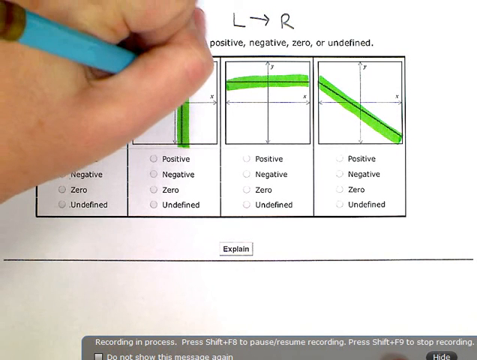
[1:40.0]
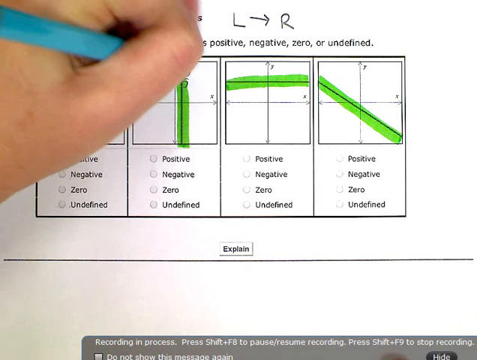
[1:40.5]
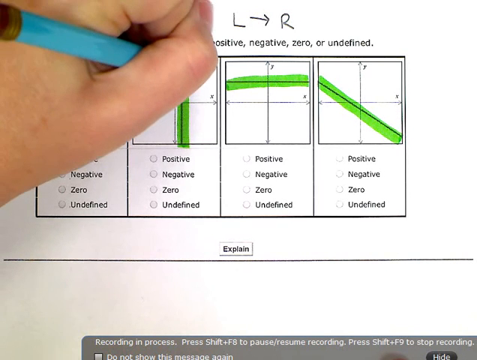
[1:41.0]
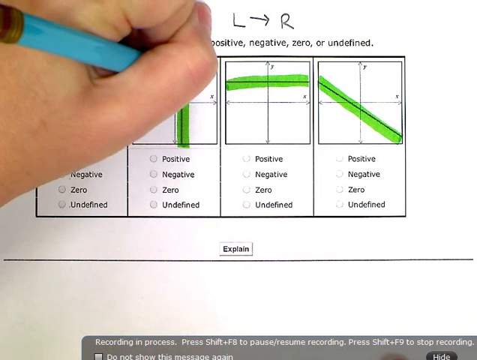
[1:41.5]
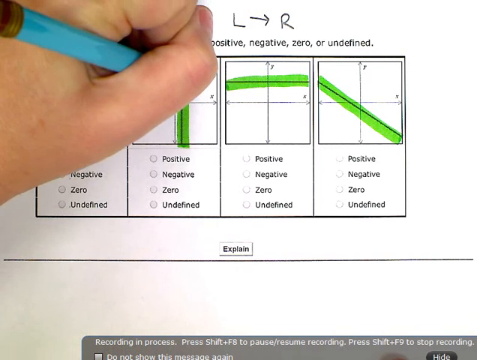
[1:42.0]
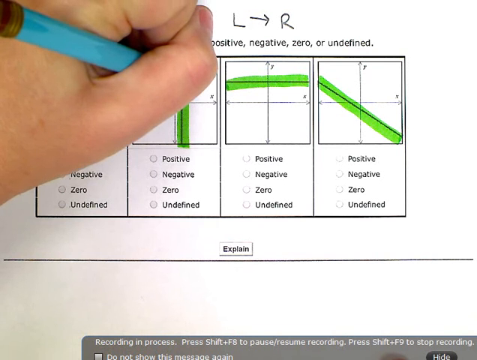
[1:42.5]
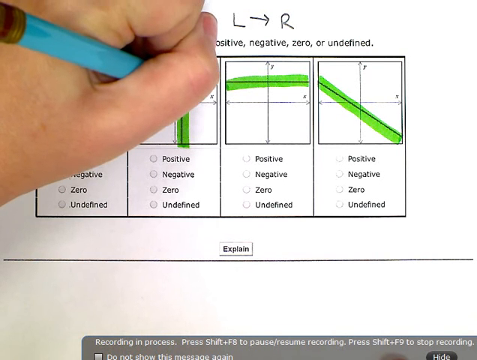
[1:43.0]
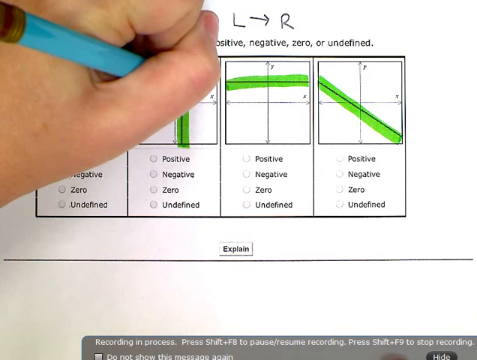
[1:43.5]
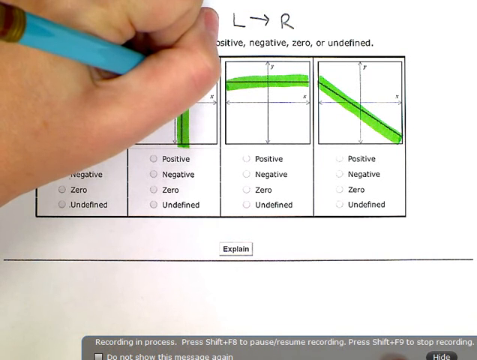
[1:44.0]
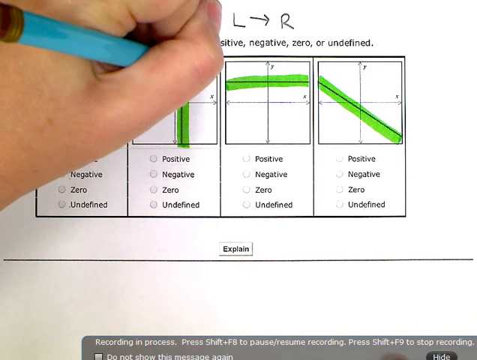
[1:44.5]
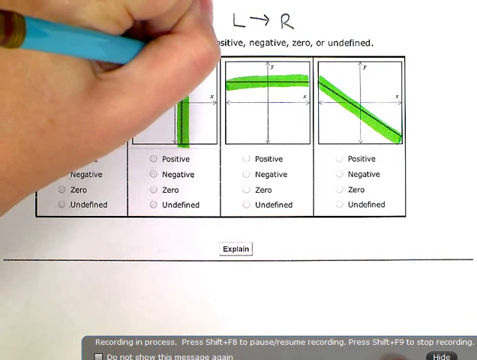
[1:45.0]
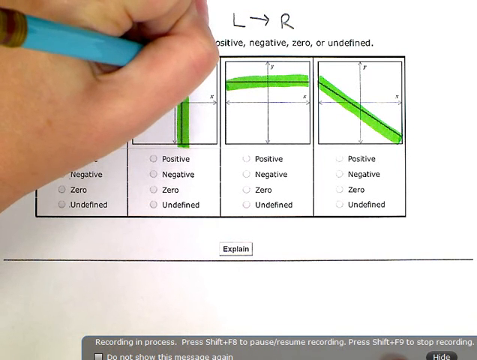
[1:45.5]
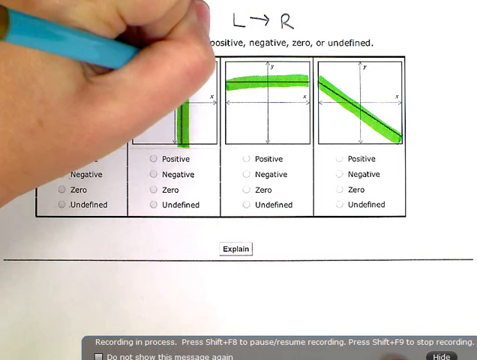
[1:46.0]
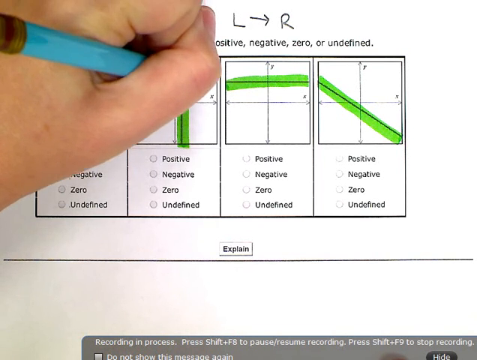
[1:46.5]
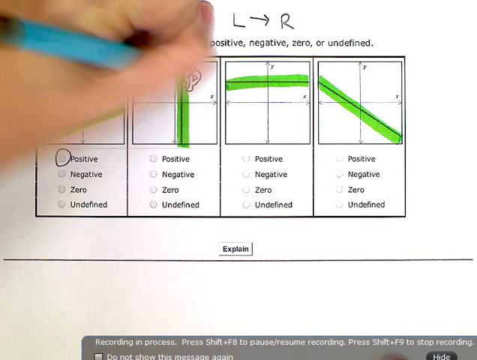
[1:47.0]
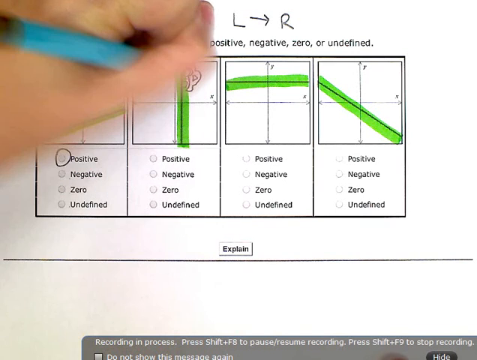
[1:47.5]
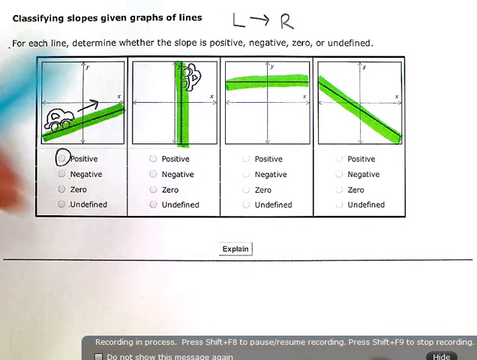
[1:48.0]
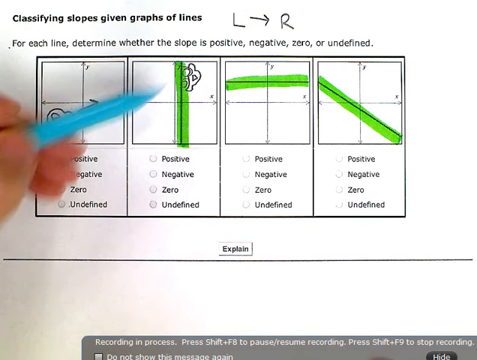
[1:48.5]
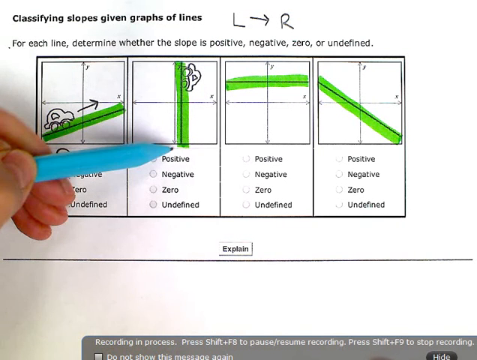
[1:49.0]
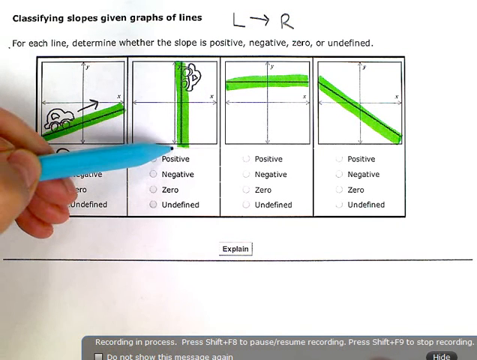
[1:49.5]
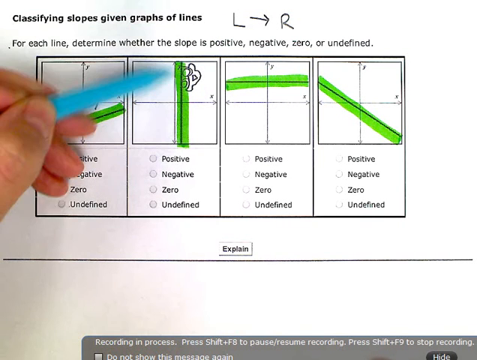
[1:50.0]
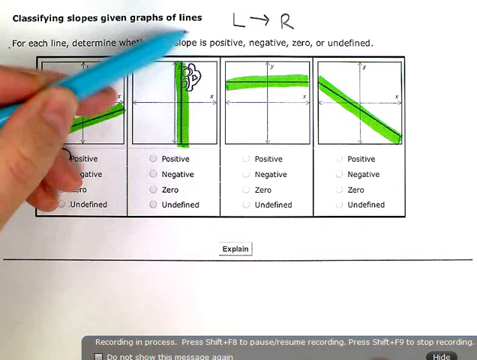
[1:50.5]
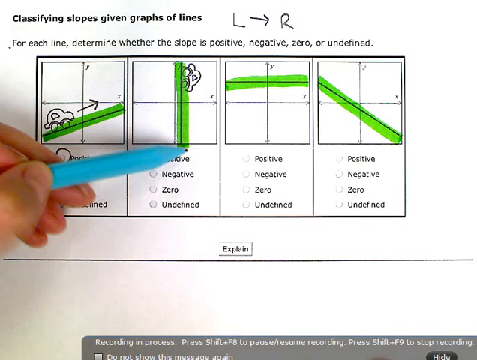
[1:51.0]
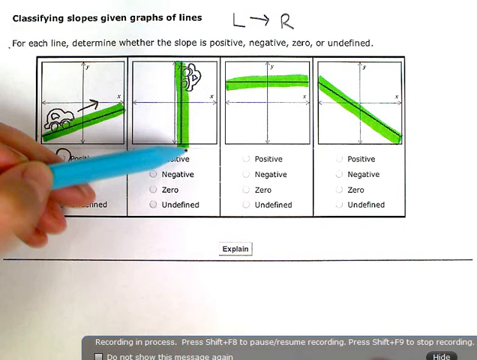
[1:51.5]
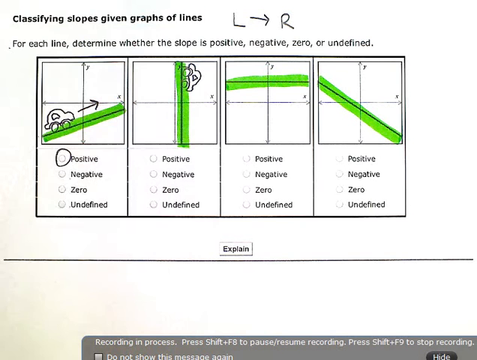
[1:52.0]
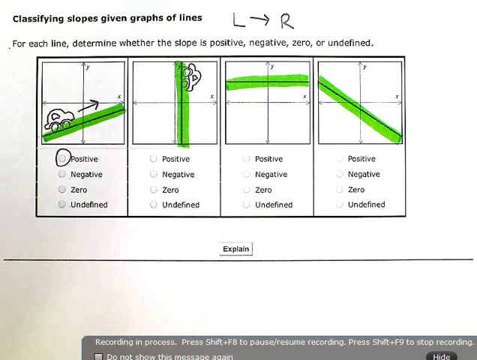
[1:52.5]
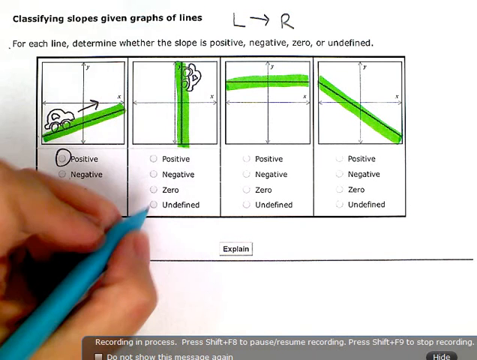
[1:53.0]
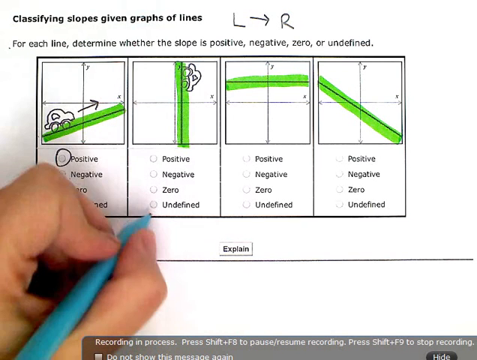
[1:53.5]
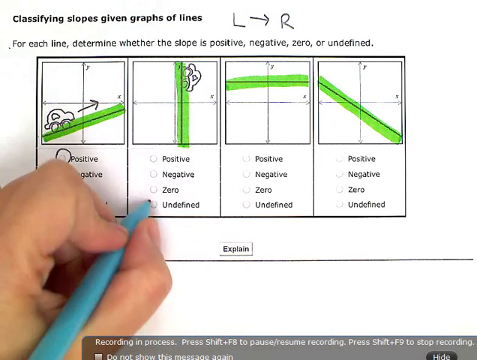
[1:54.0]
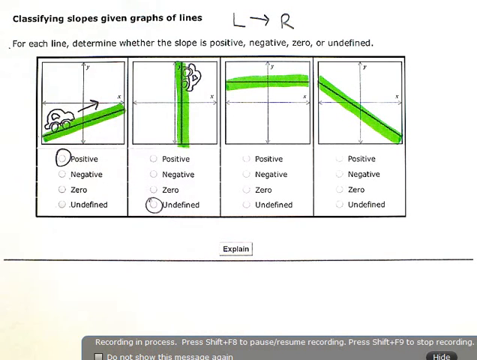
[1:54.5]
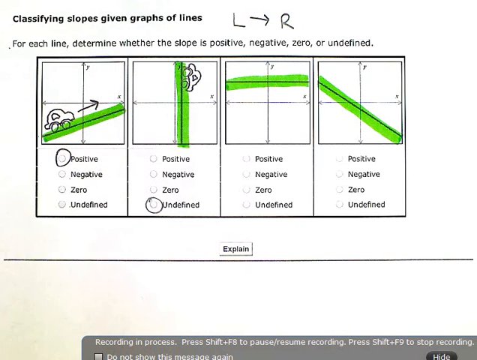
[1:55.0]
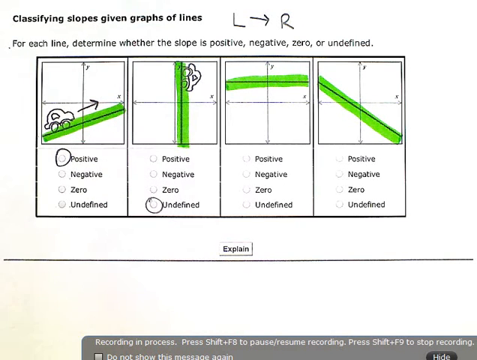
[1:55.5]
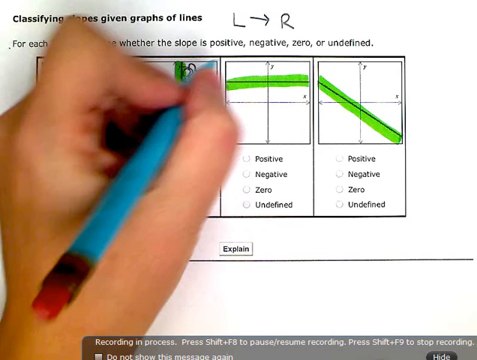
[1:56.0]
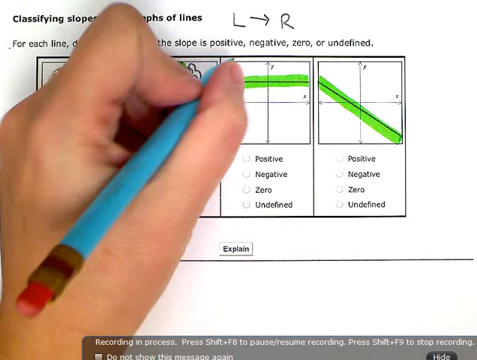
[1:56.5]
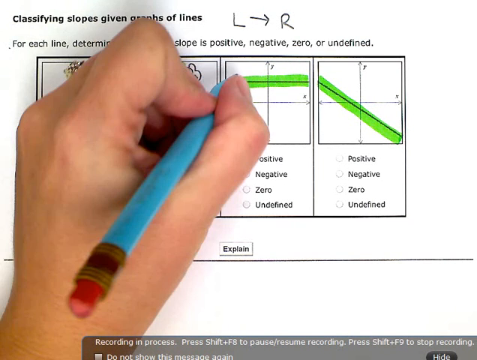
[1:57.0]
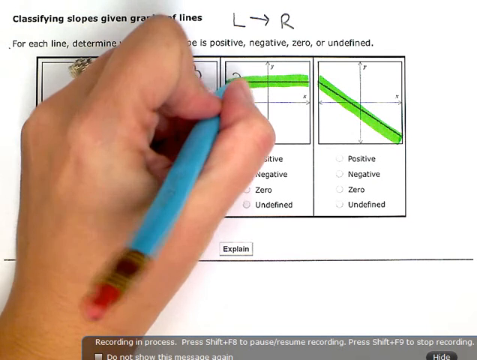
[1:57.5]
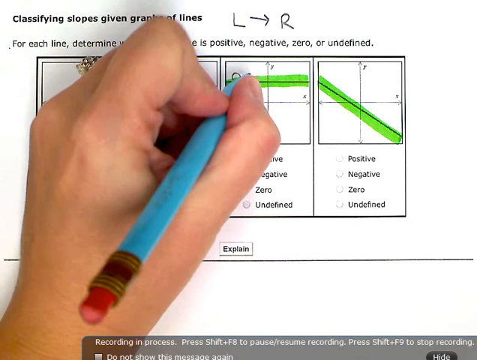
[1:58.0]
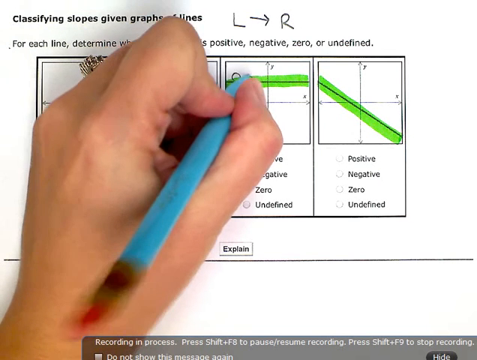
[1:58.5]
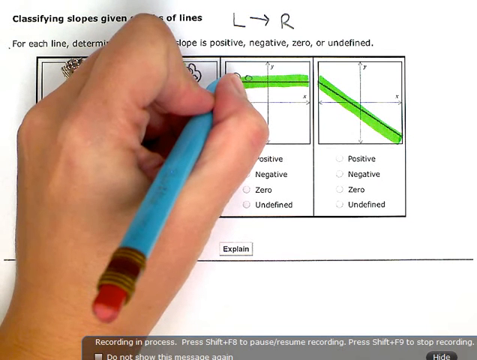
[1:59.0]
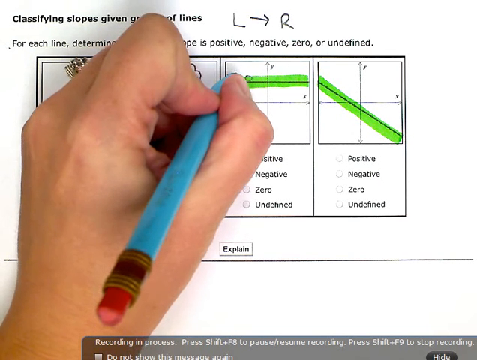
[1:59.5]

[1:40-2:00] A young child's hand is on the left-hand side, so the child appears to be left-handed. At the top is "classifying slopes given graphs of lines", and the child has written a capital L and a capital R with an arrow between them pointing from left to right. Below, "for each line, determine whether the slope is positive, negative, zero, or undefined" is followed by the rectangular box with four problems, each with a different line and positive, negative, zero, undefined written underneath, so the correct answer is to be circled. The child appears to be attempting the questions: she appears to have answered the first as positive and to be working on the second problem. She draws a little car on its line, which is vertical, and circles undefined as her answer. She then goes on to work out the third problem.